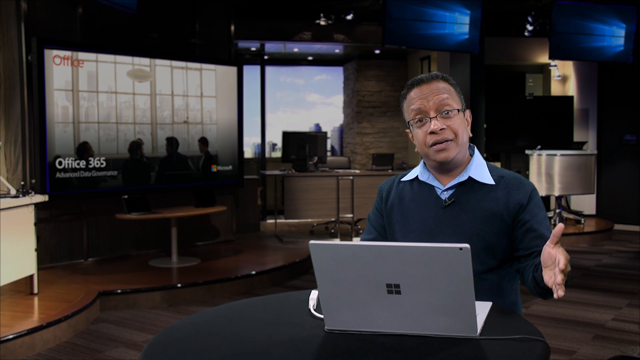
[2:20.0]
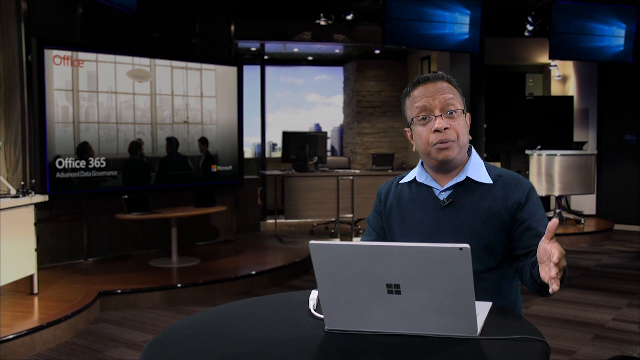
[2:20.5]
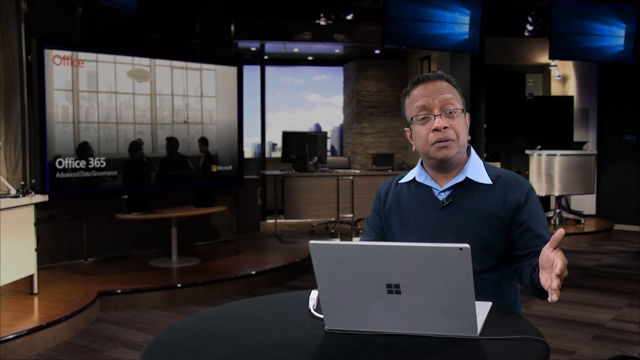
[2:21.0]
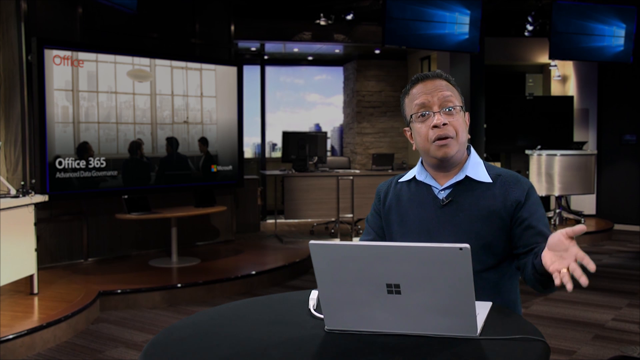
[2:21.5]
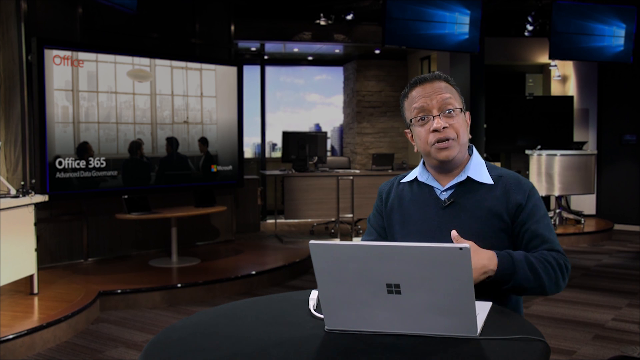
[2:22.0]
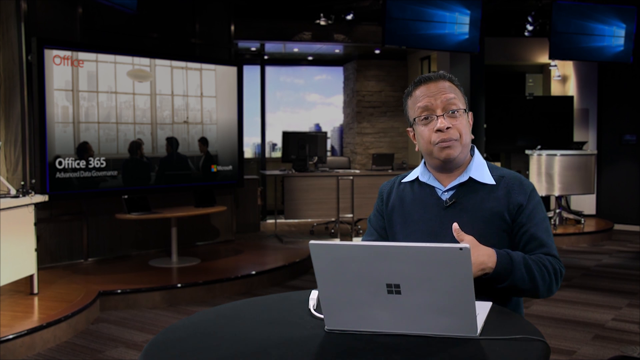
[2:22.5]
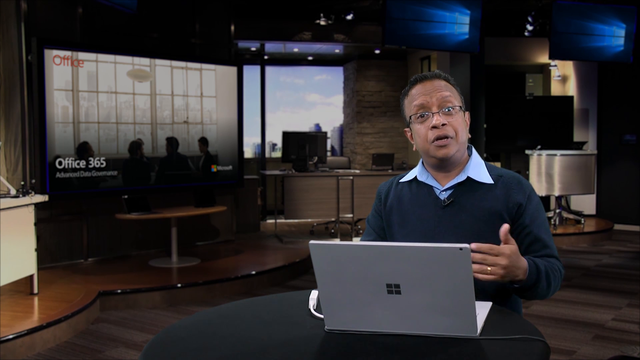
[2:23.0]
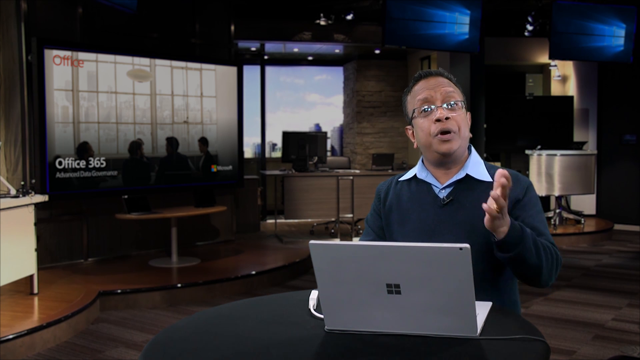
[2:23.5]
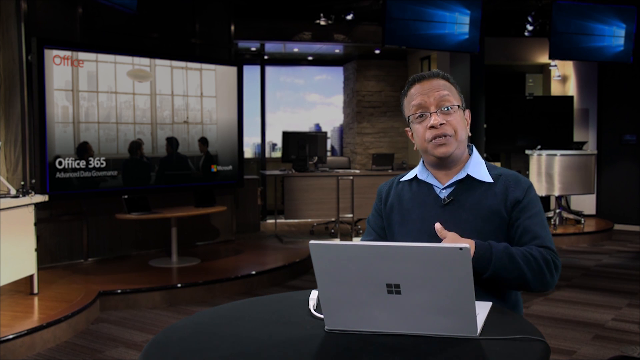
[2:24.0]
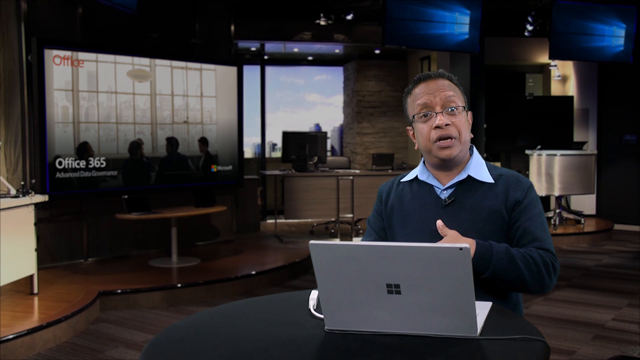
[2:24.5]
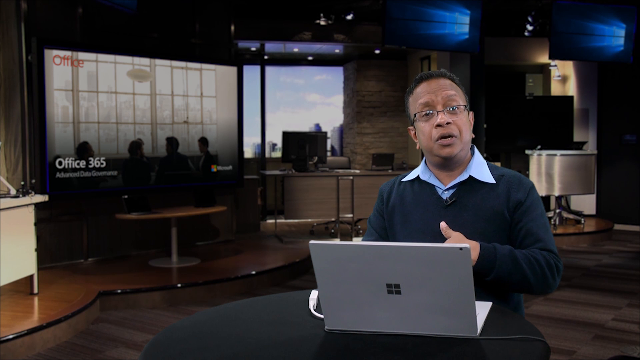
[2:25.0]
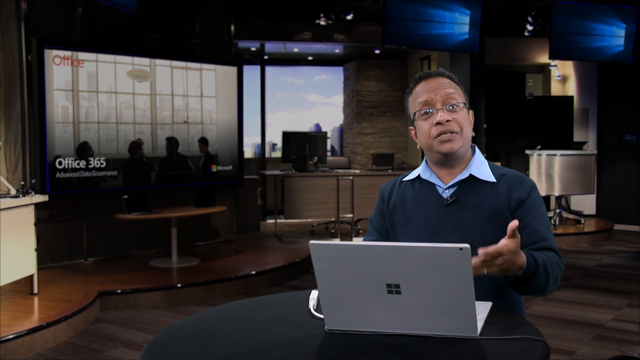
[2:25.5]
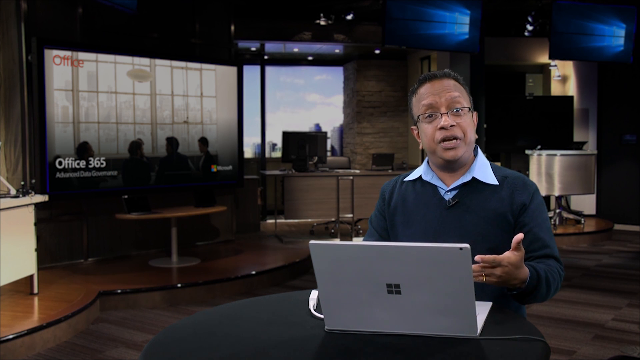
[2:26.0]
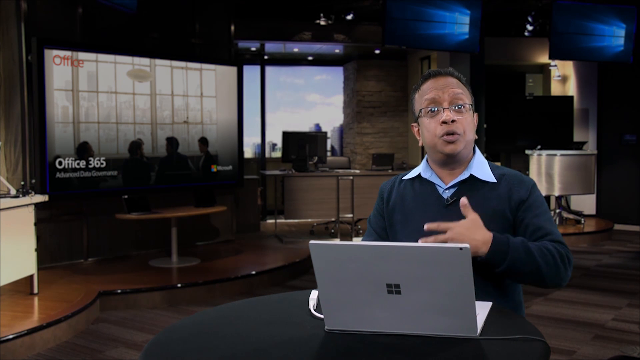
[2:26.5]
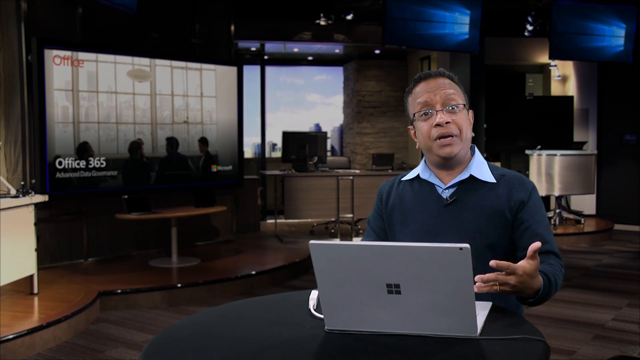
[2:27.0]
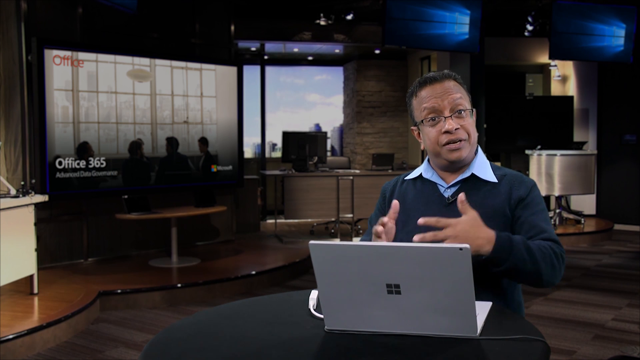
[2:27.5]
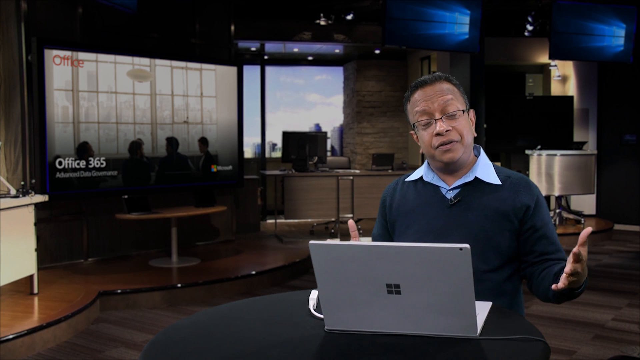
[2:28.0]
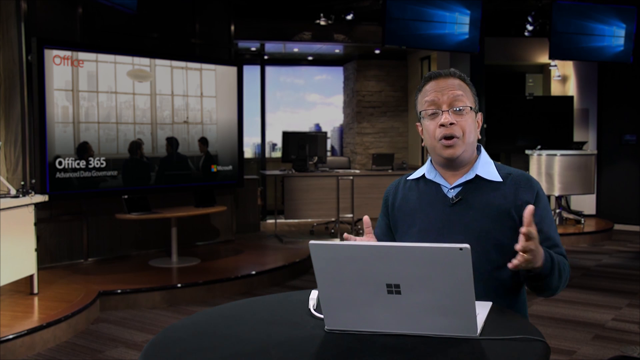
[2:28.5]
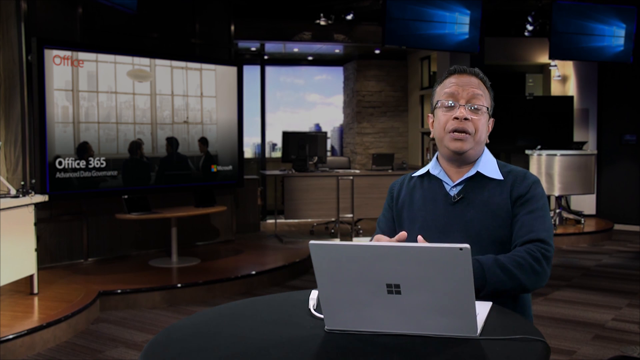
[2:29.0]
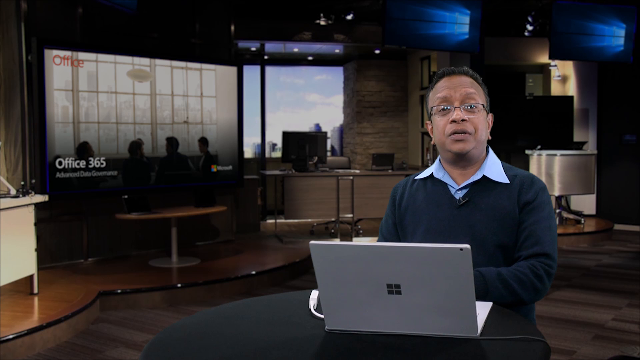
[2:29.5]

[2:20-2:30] A man sits in front of a laptop on what looks like a desk with a brown wooden countertop. He appears to be talking to the camera and seems to be speaking with his left hand, moving it back and forth and swaying it around as he talks. He wears a blue sweater with a light blue collared shirt sticking out, and glasses. He then uses both hands to talk, kind of separating them and bringing them back together; he almost looks like he is waving somebody over. He has a ring on the ring finger of his left hand. The background looks like an office where the lights have been kind of turned off, so it looks dim.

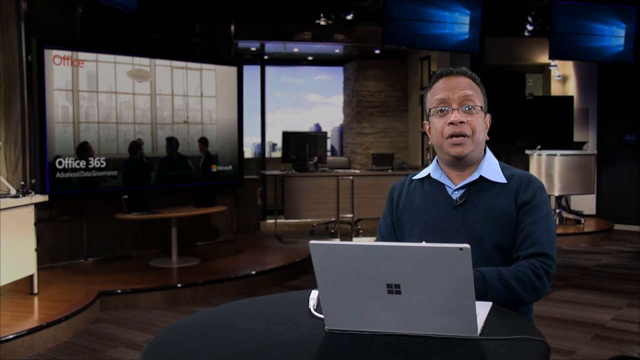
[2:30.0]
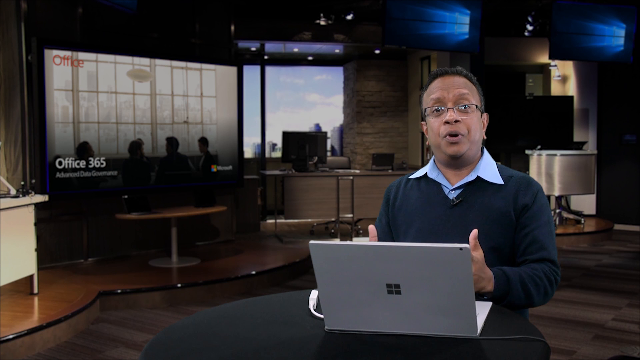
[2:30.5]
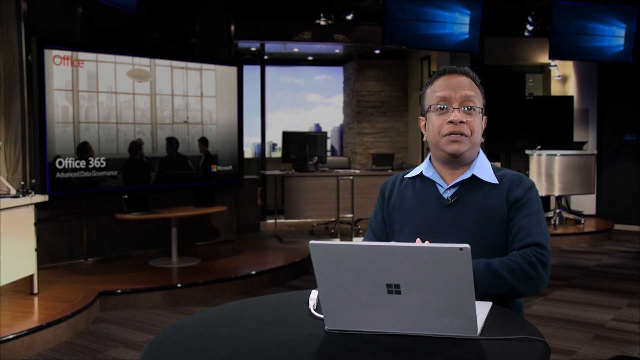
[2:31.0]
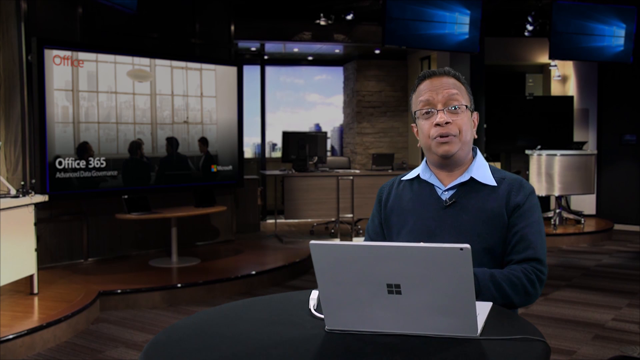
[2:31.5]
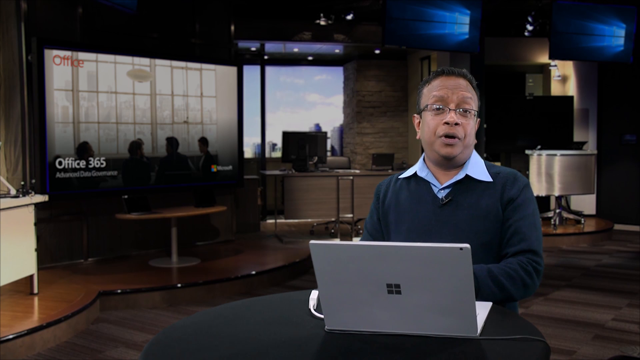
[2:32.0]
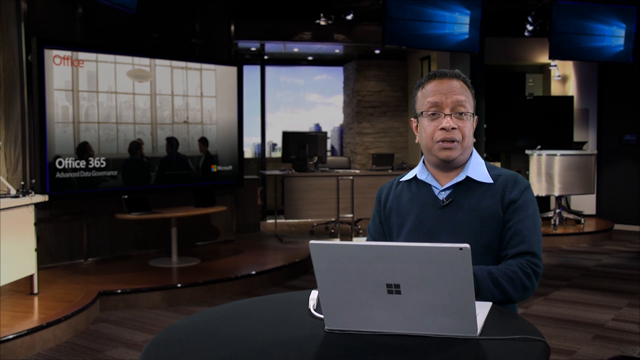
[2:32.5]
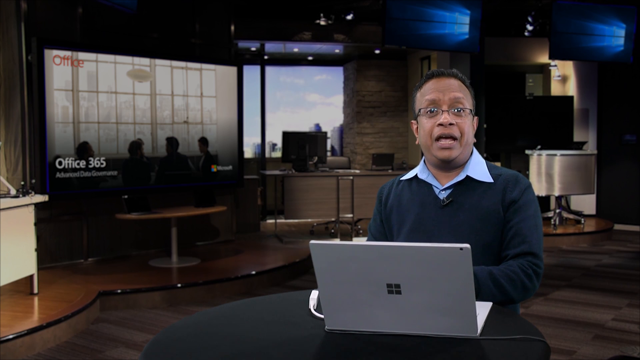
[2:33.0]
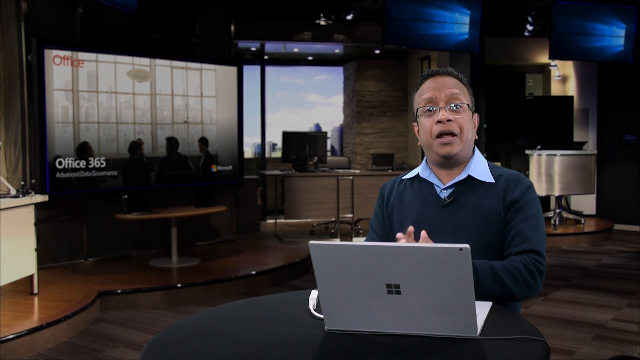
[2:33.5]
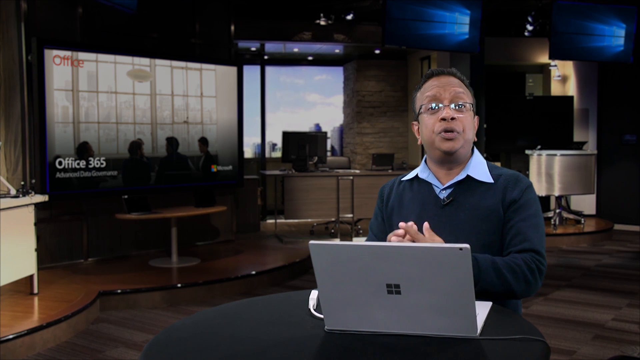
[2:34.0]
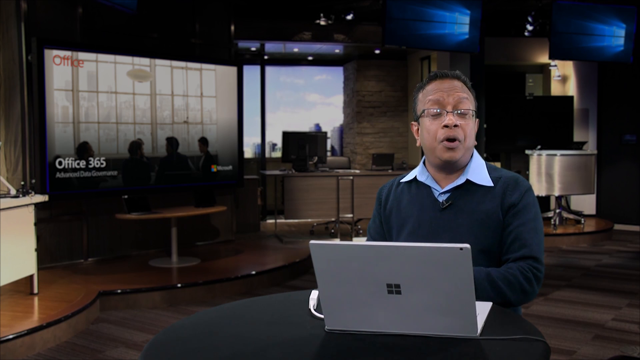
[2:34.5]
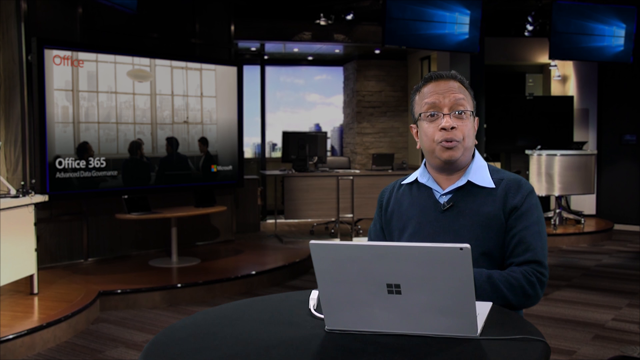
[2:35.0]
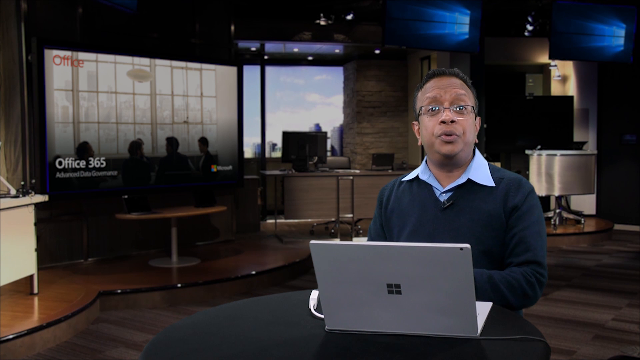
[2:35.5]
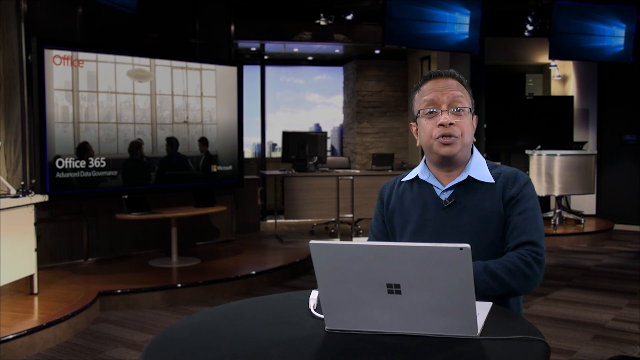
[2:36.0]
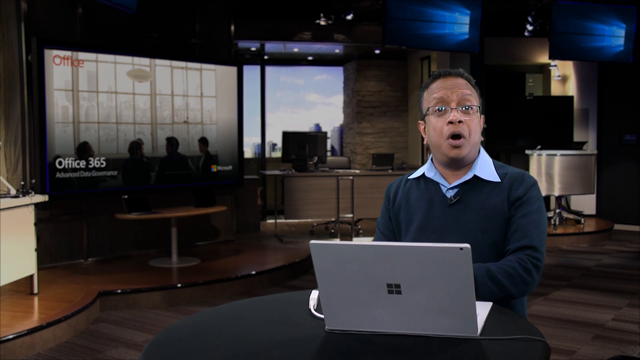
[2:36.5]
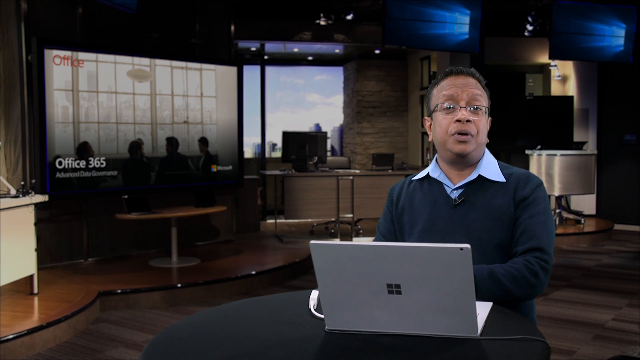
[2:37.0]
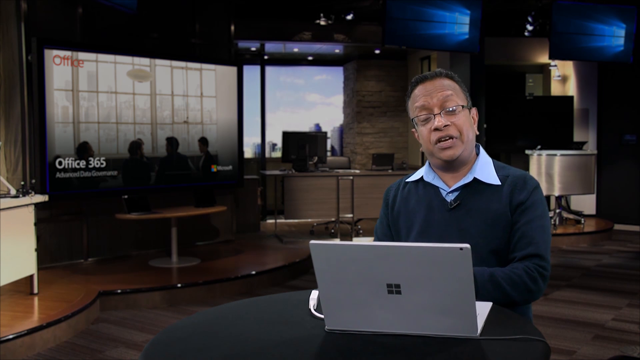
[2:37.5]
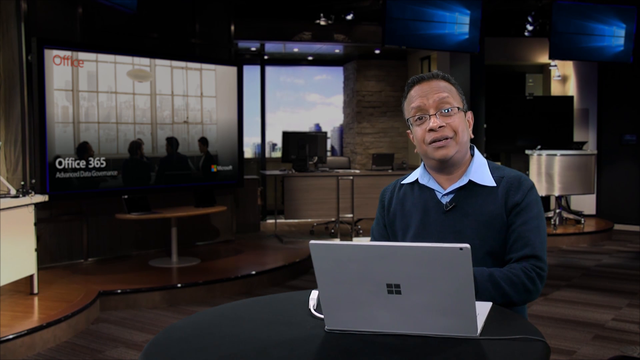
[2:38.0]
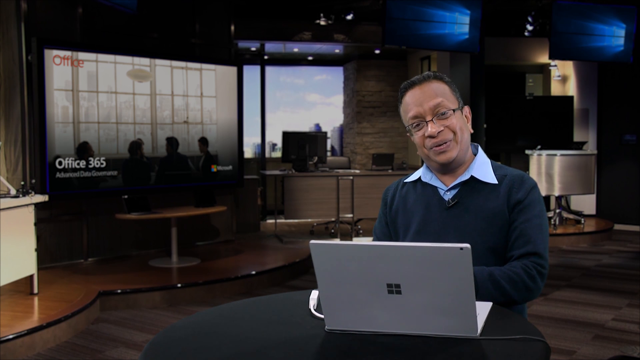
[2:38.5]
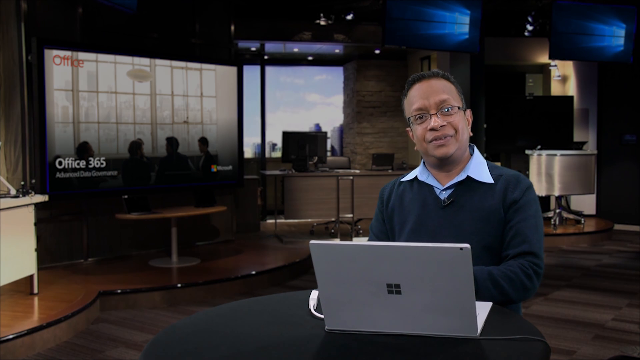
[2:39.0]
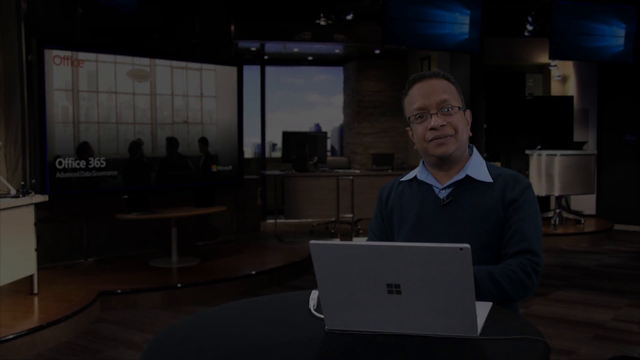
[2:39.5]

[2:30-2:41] A man appears to be sitting at a desk, with a laptop in front of him on a wooden countertop. He wears a blue sweater with a light blue collared shirt underneath, its collar sticking out, and glasses. He appears to be talking with his hands, repeatedly moving them away from each other and closing them together, and they tend to disappear behind the laptop's screen. In the background is an office with the lights dimmed, where a whole bunch of desks and other offices with windows can be seen, along with the silhouettes of four people in what looks like a conference room.